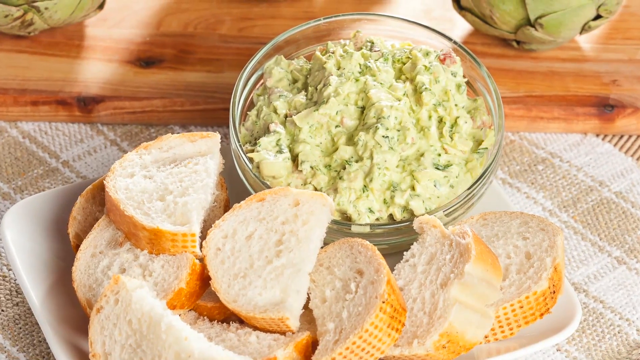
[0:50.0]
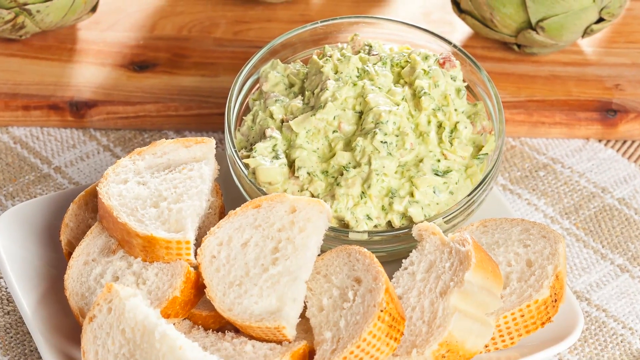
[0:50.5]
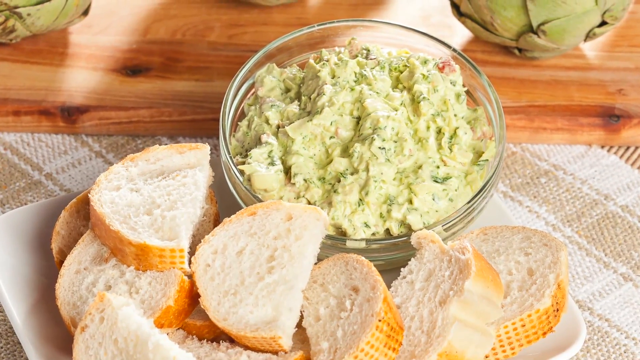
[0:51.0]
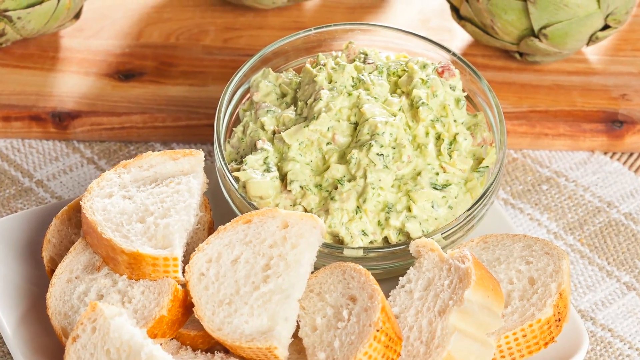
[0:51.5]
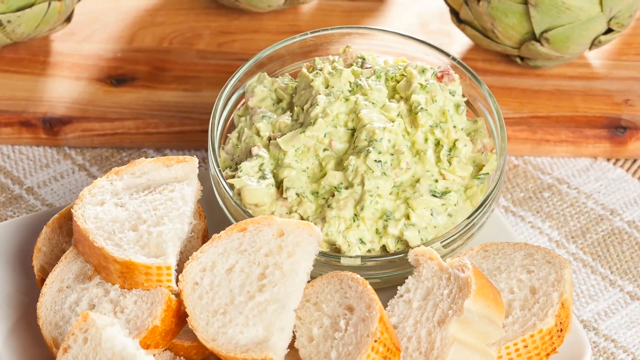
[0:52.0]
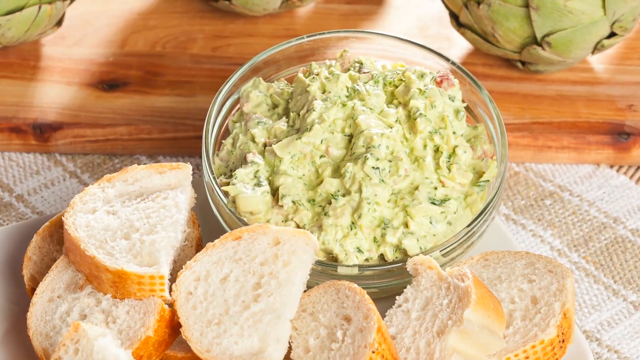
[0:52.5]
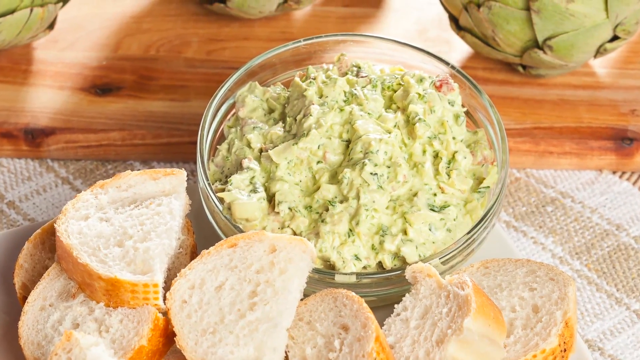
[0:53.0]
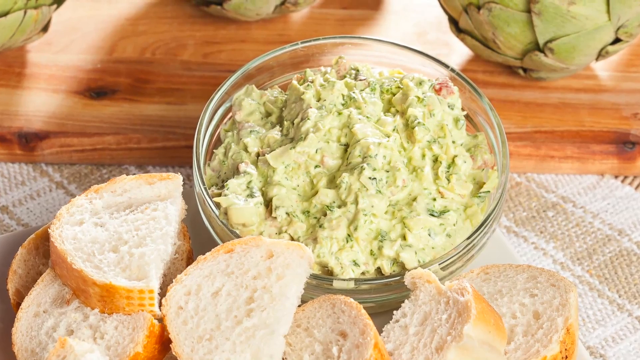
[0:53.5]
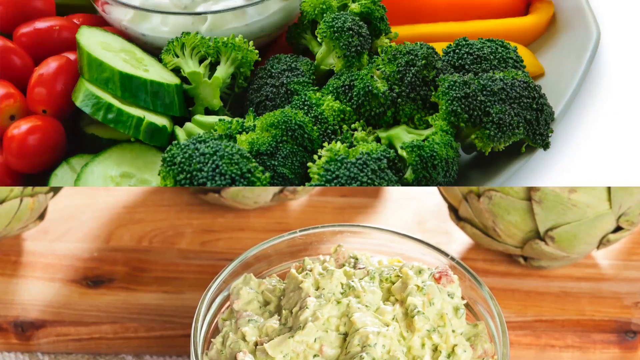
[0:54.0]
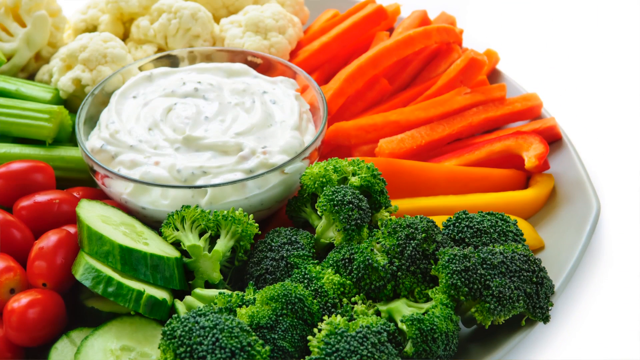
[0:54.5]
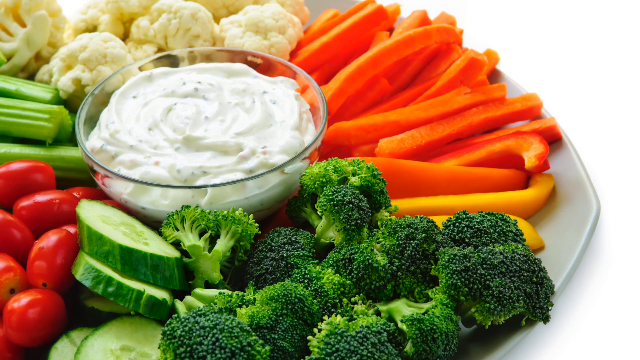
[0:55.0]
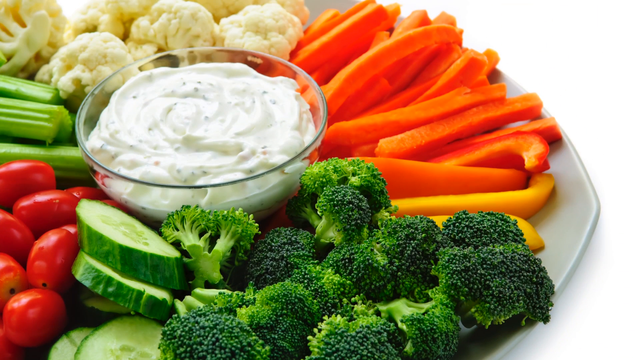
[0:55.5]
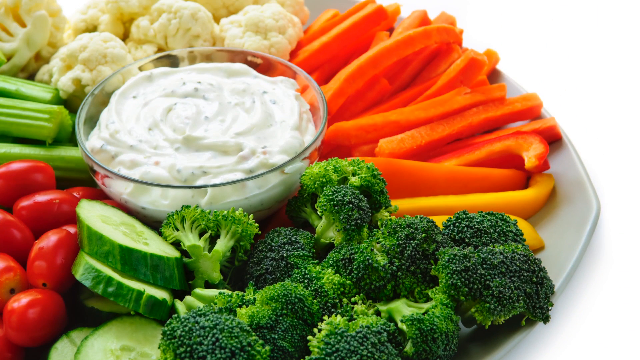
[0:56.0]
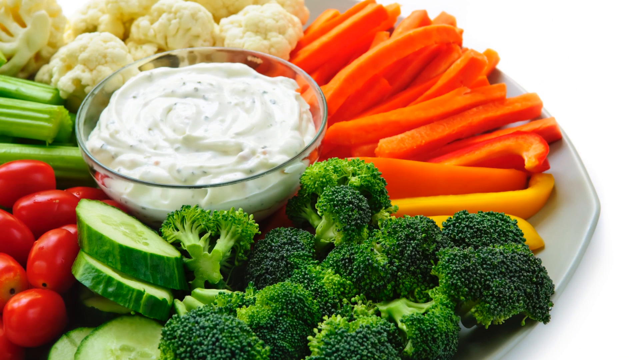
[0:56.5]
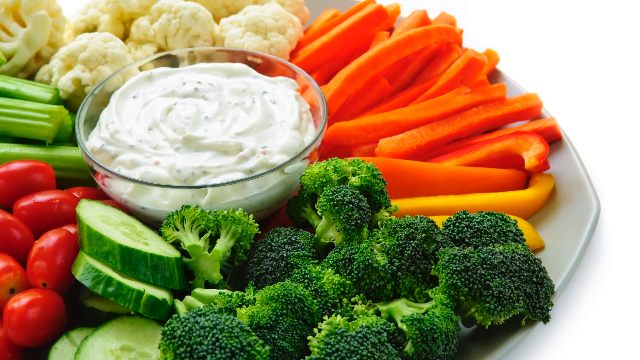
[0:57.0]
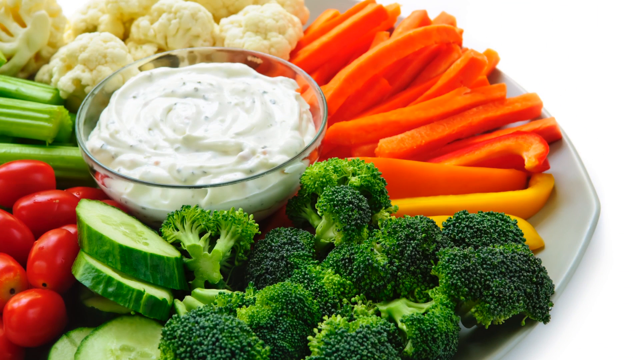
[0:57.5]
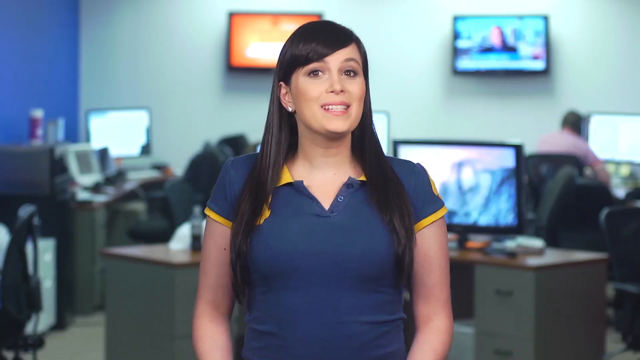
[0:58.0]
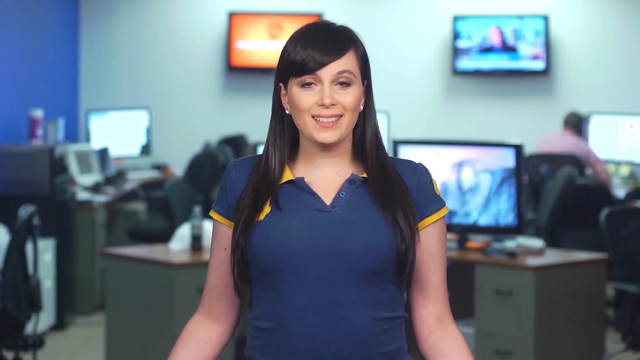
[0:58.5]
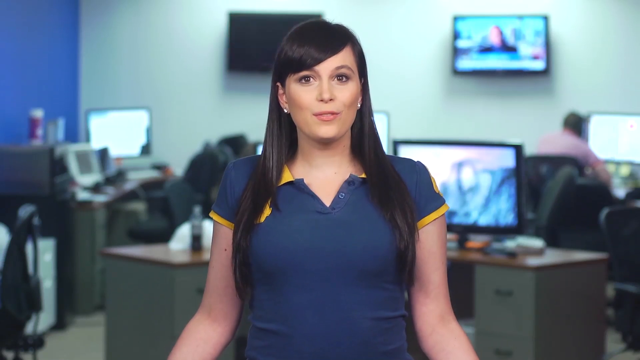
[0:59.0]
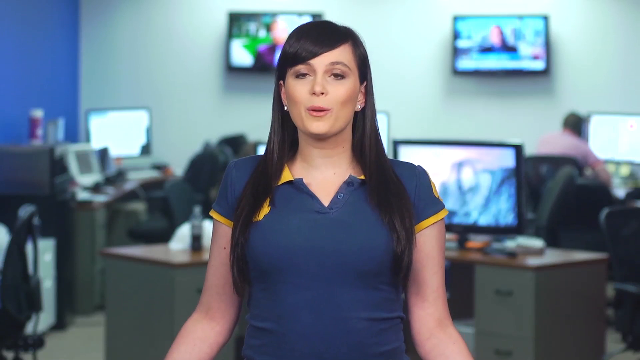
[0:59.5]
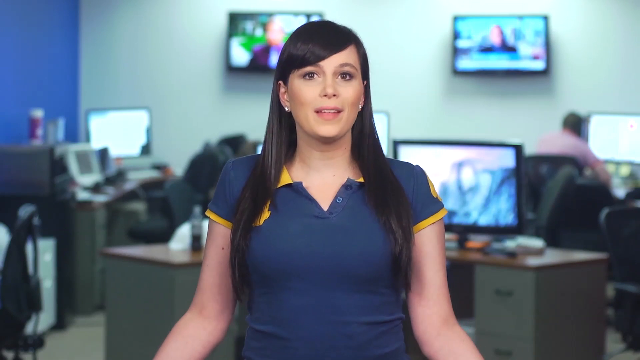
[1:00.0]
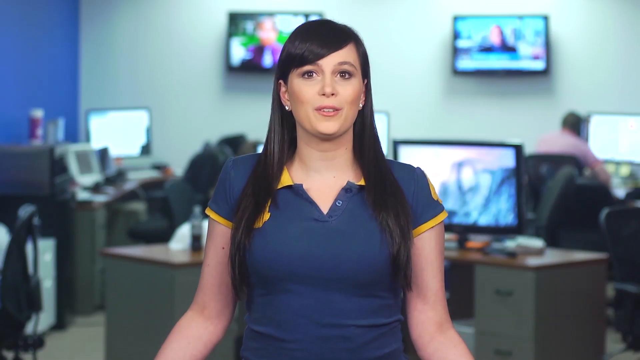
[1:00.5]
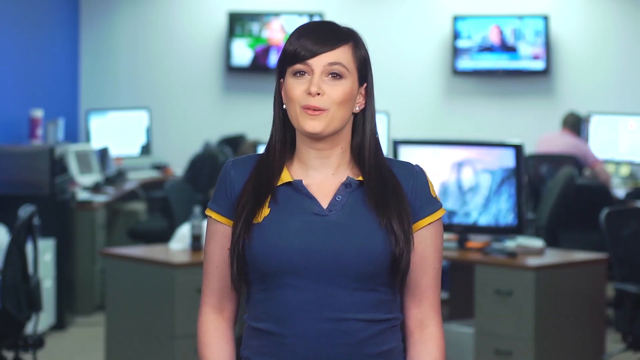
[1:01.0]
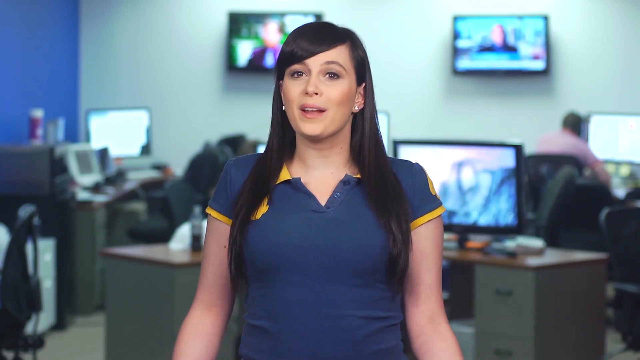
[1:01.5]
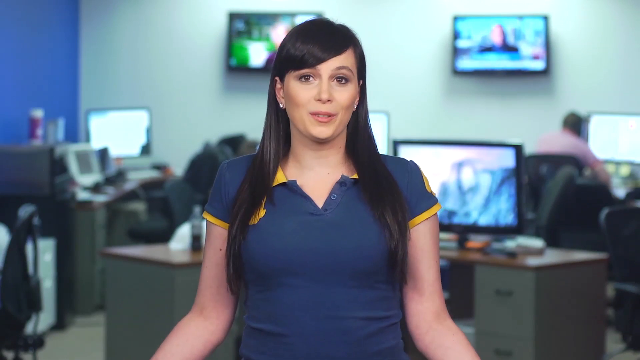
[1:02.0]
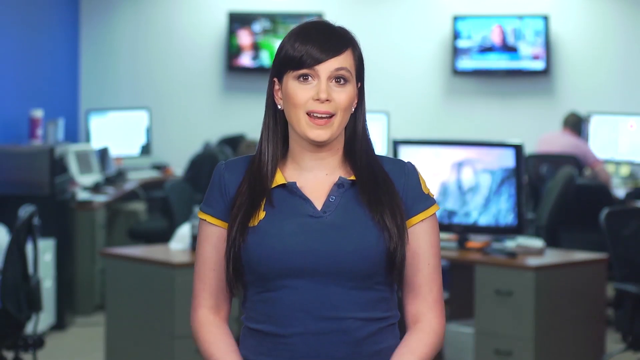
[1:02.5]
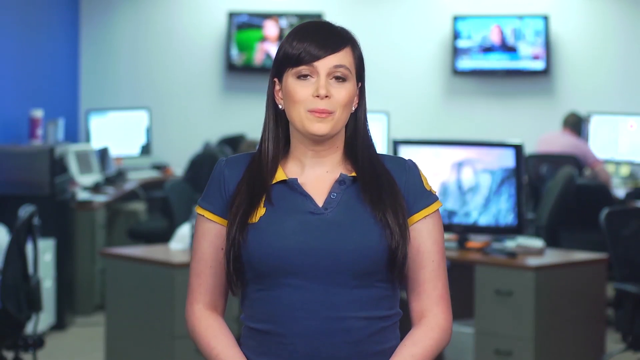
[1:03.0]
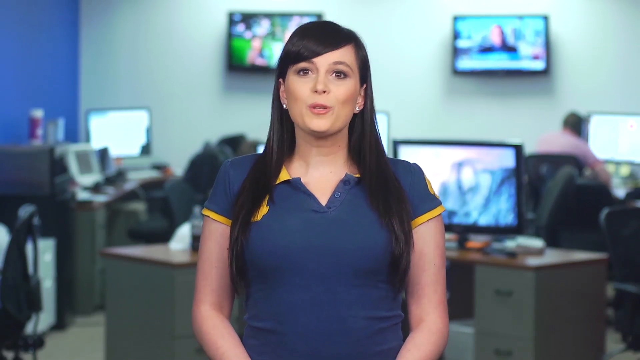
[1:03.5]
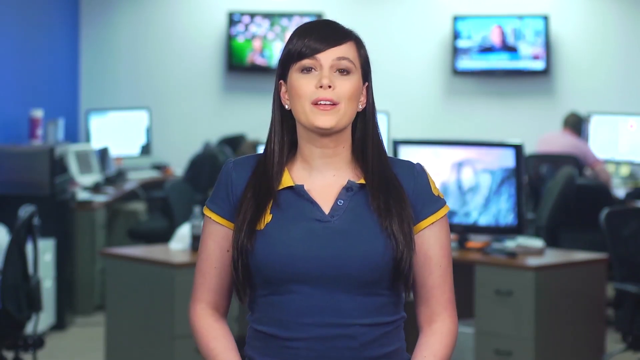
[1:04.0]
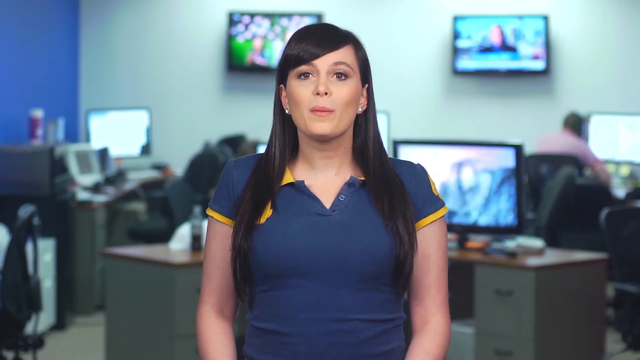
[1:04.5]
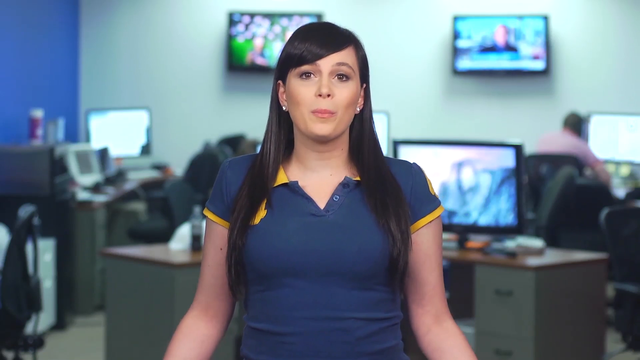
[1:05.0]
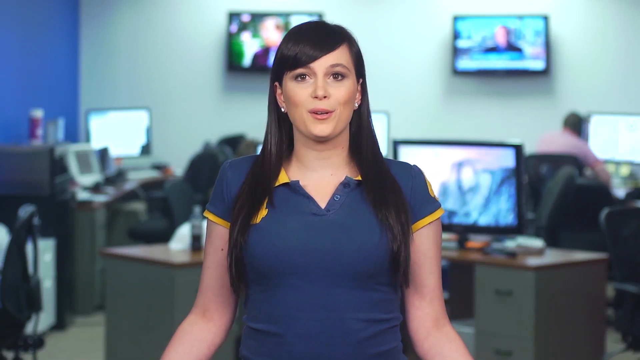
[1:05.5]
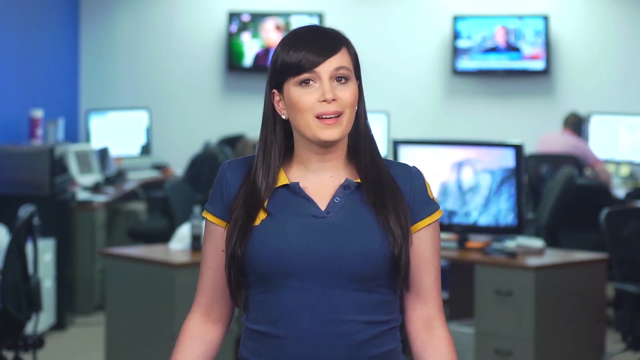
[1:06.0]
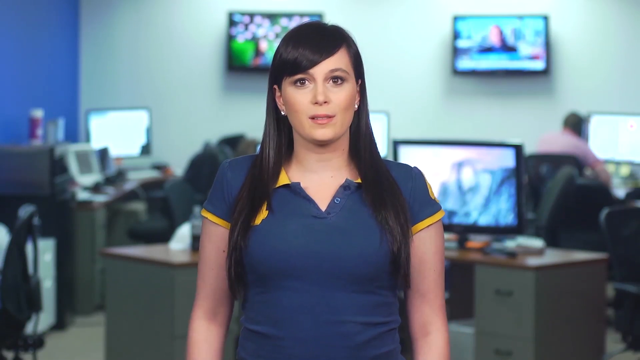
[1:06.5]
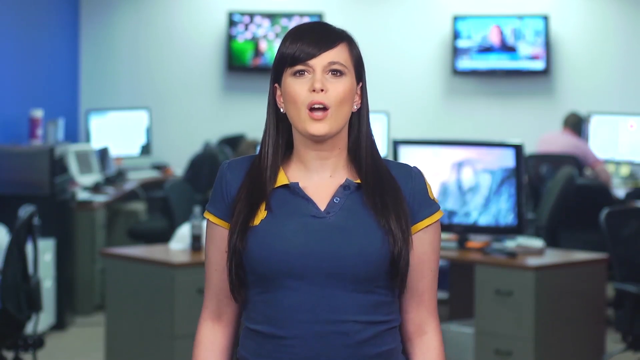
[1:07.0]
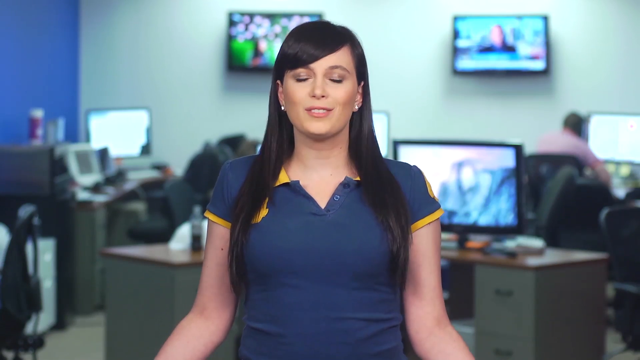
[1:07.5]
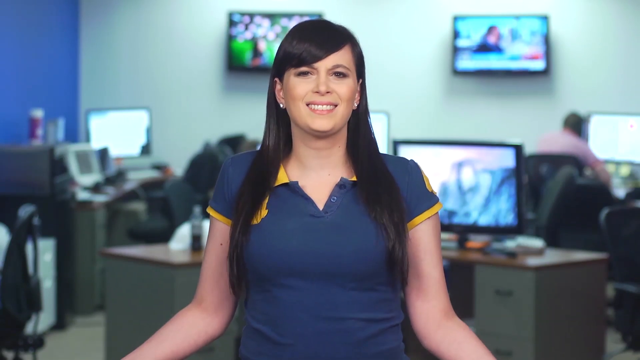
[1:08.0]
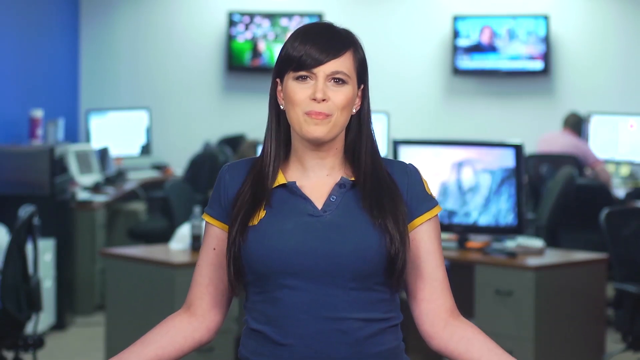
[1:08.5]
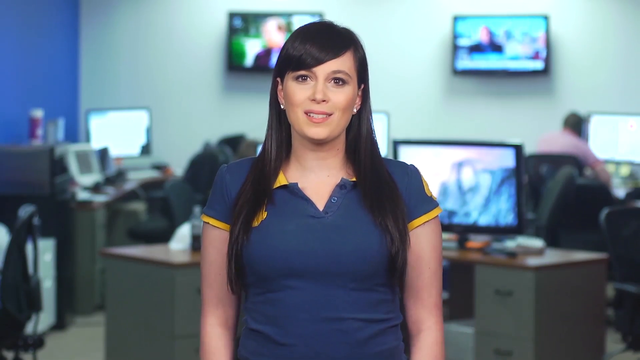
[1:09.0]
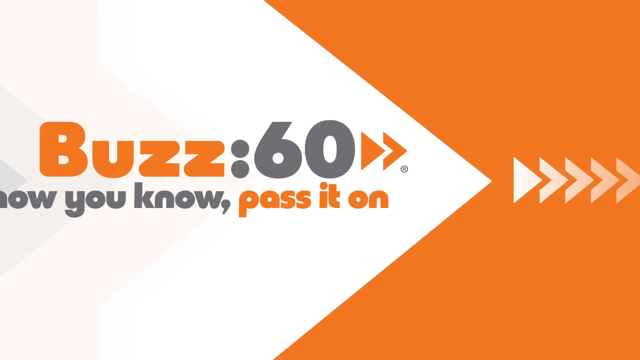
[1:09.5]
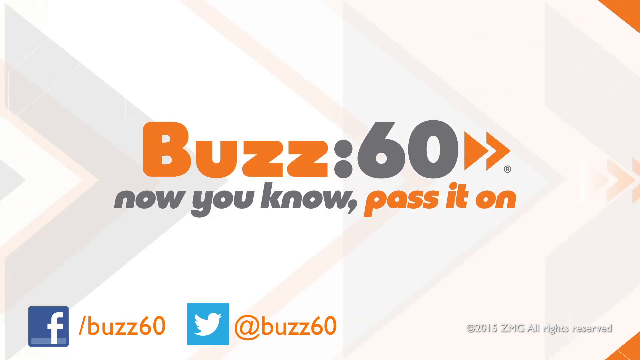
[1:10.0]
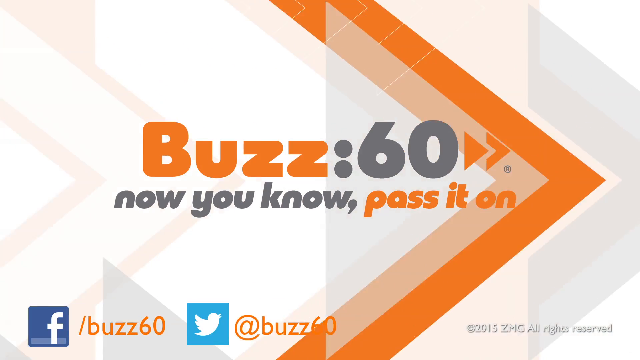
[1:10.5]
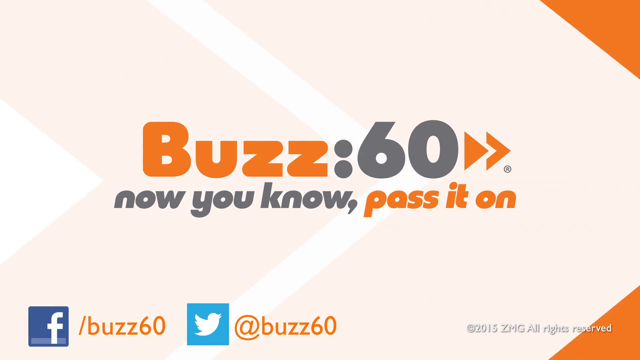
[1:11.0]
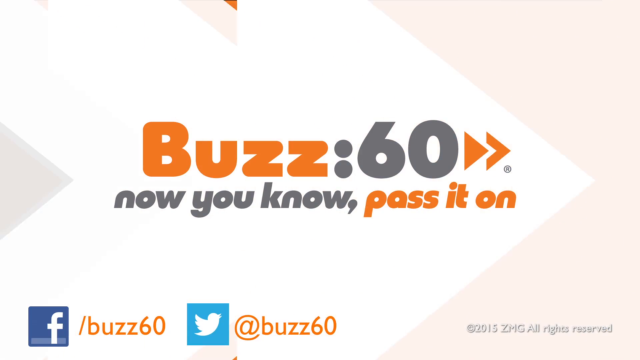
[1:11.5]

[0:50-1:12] Fresh bread is placed in a white bowl, and a creamy-looking sausage is placed in a white glass cup. Other designs are on the table, along with carrots, cream, cabbage, cucumber and fresh tomatoes. After that the presenter appears, apparently in the studio, with different screens and televisions behind her and other journalists apparently working. She uses her hands to demonstrate as she speaks. The video is credited to BOSS60.